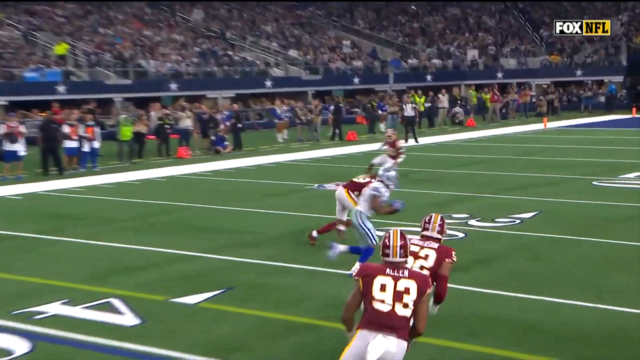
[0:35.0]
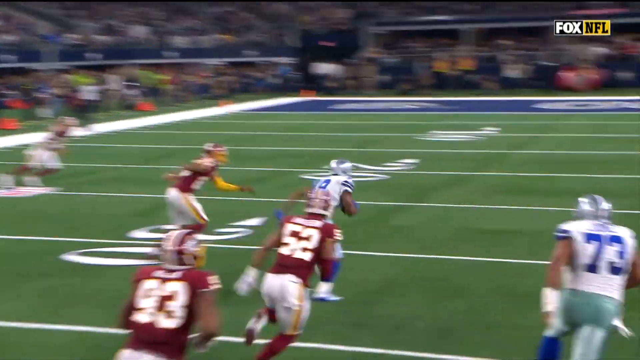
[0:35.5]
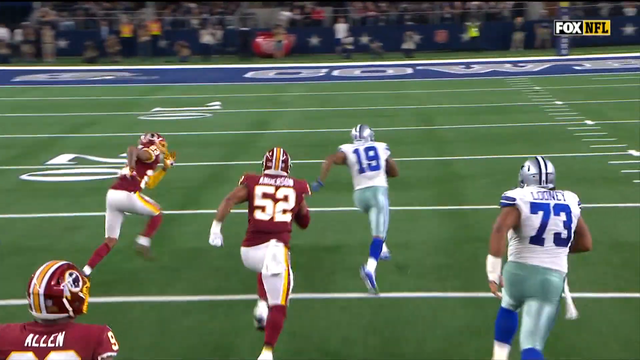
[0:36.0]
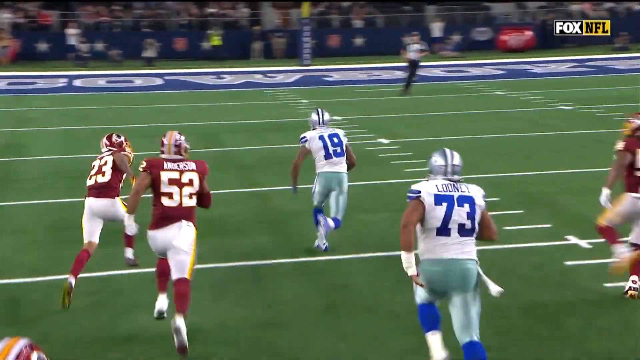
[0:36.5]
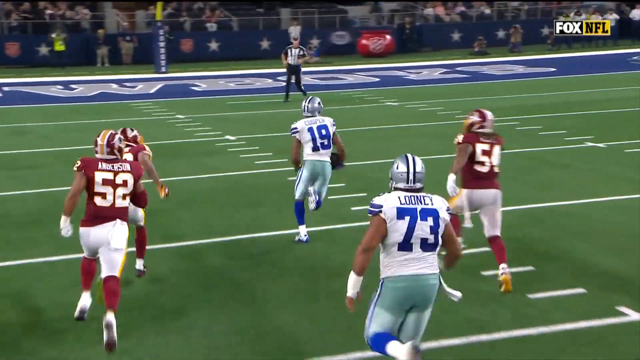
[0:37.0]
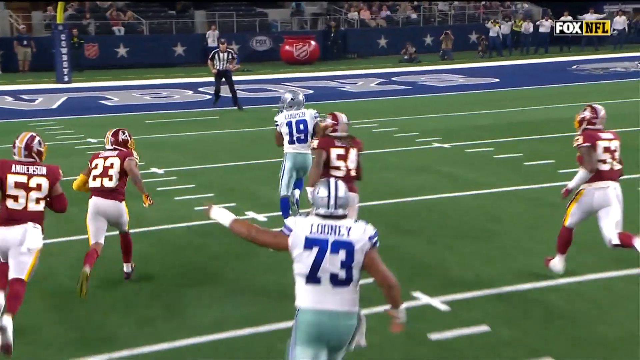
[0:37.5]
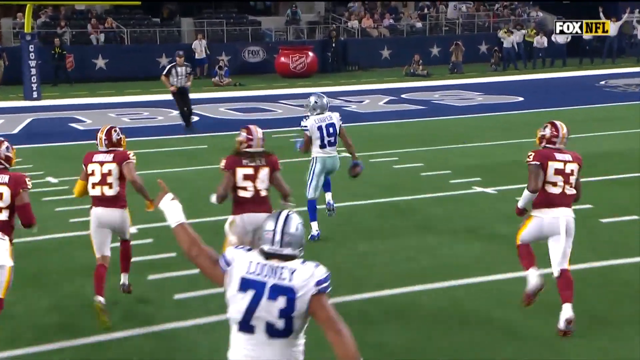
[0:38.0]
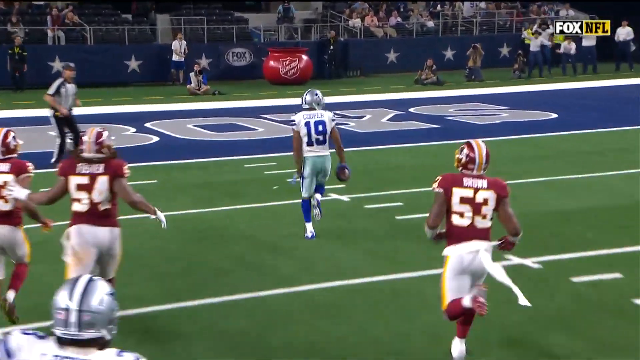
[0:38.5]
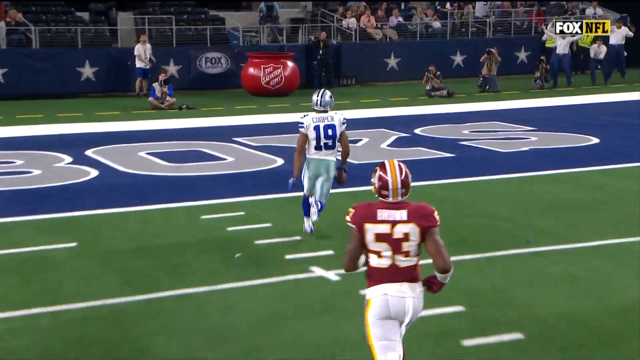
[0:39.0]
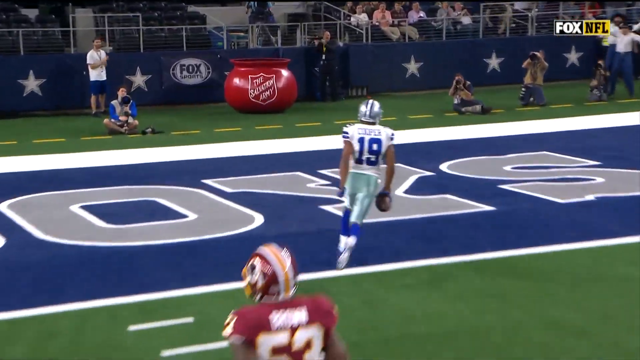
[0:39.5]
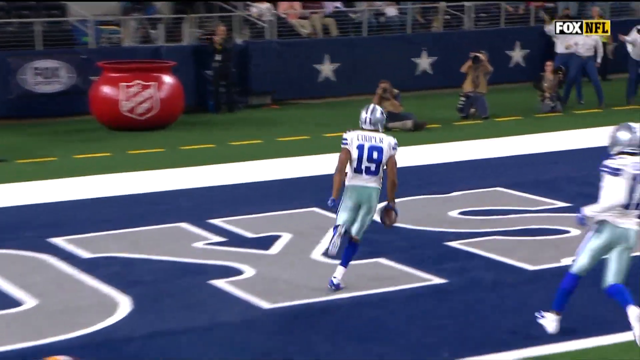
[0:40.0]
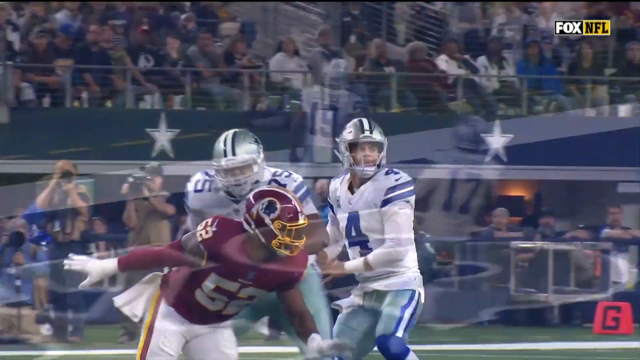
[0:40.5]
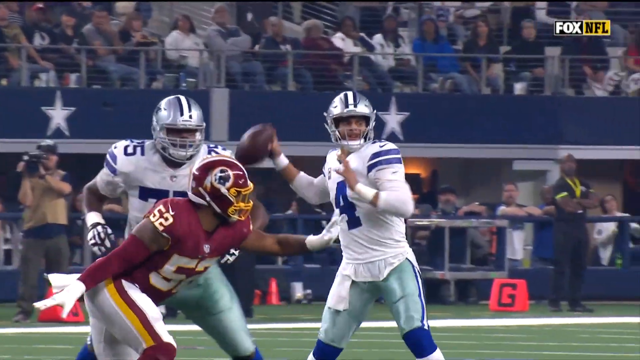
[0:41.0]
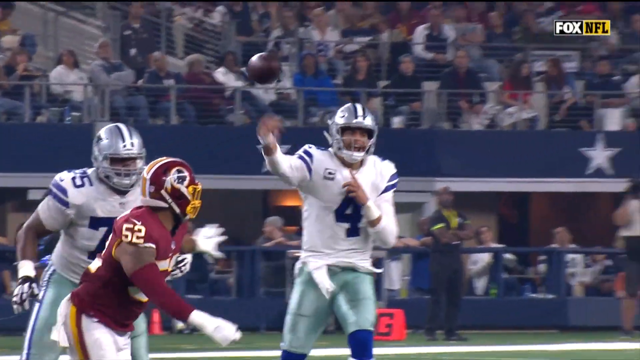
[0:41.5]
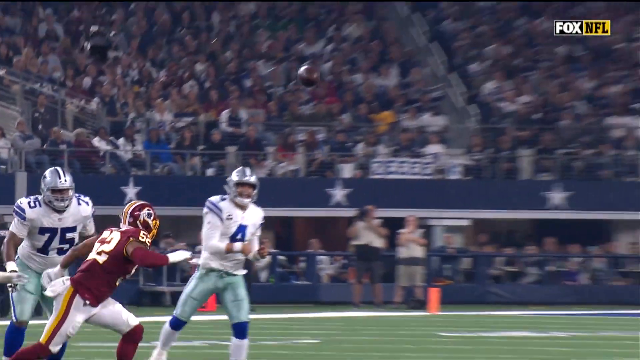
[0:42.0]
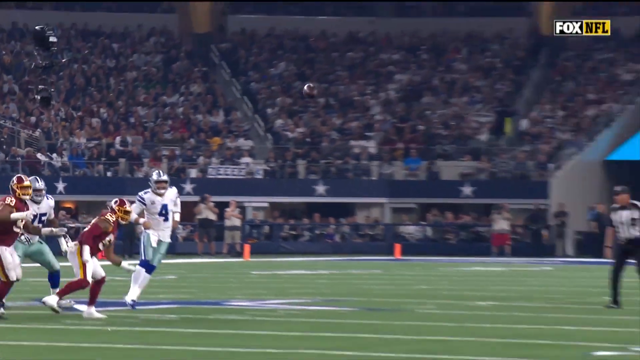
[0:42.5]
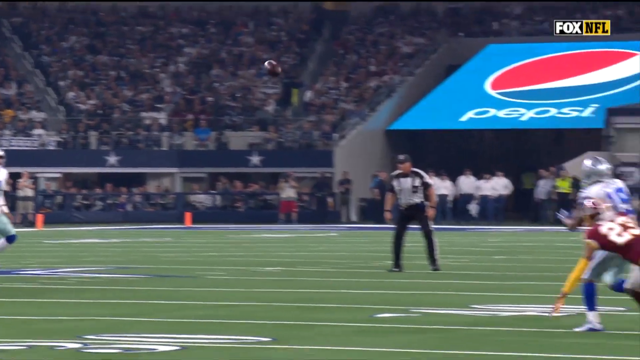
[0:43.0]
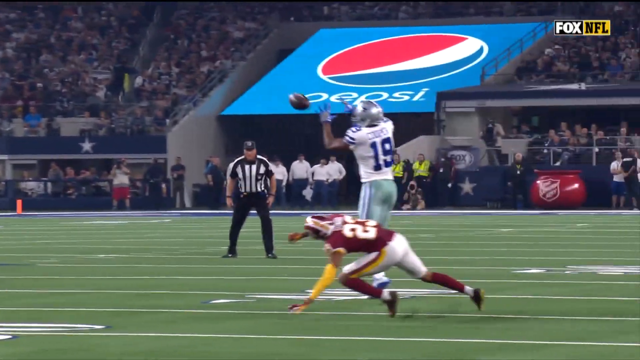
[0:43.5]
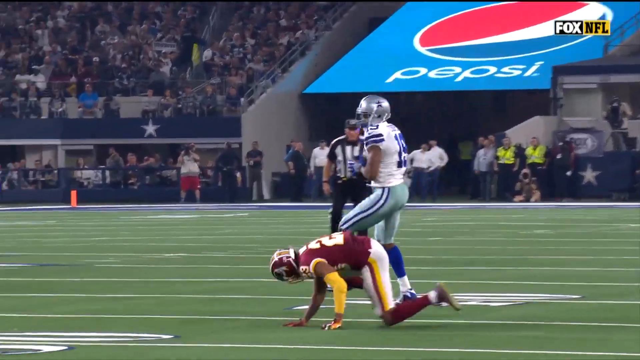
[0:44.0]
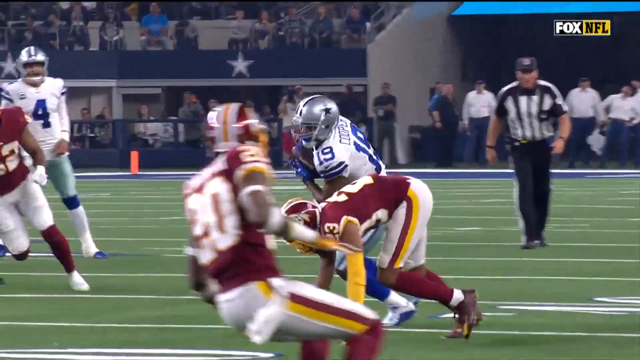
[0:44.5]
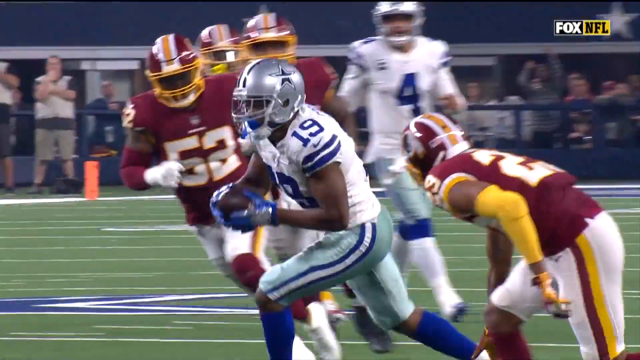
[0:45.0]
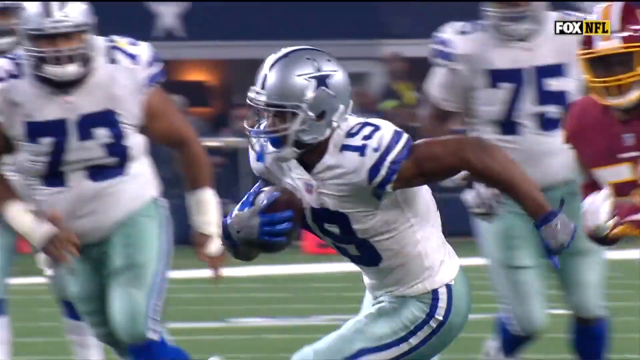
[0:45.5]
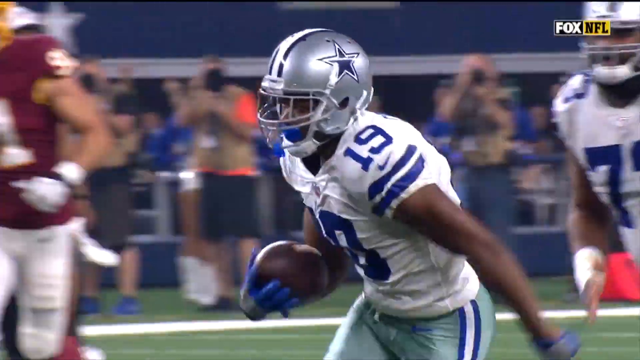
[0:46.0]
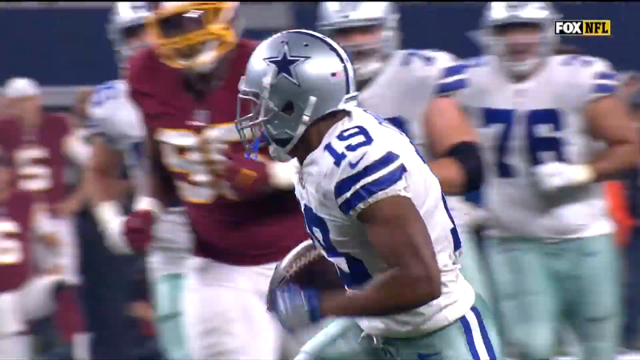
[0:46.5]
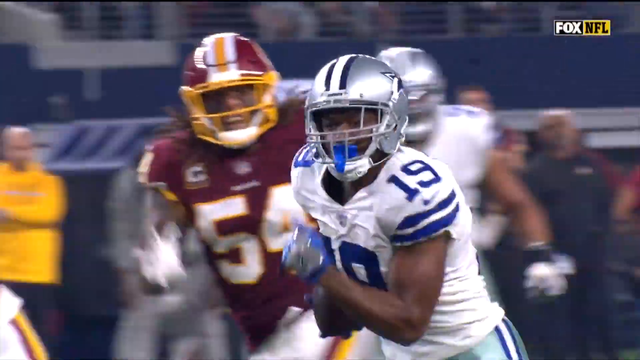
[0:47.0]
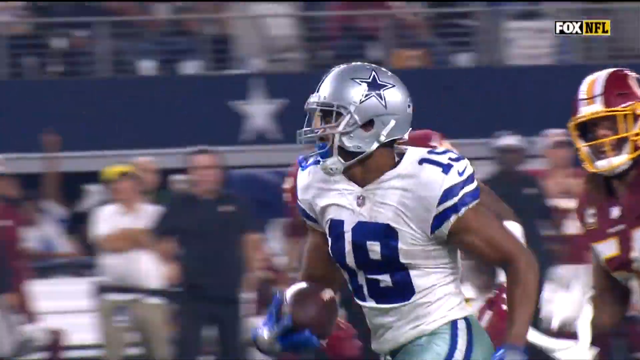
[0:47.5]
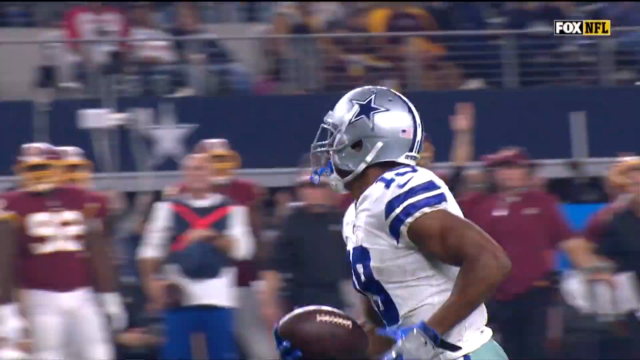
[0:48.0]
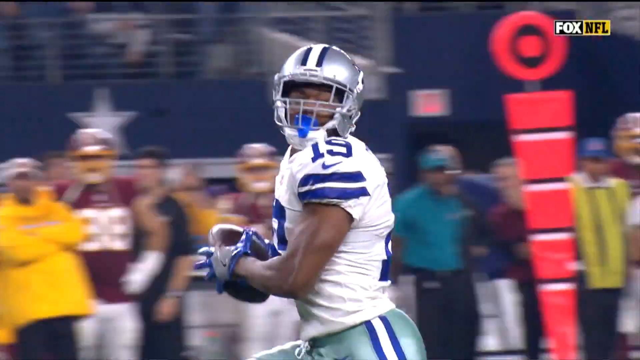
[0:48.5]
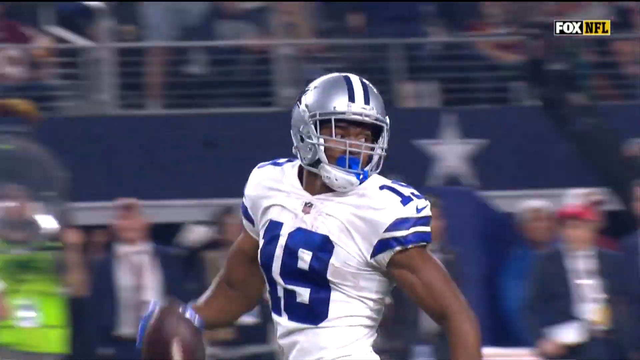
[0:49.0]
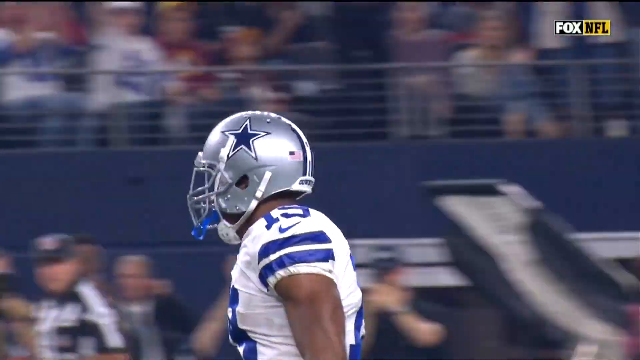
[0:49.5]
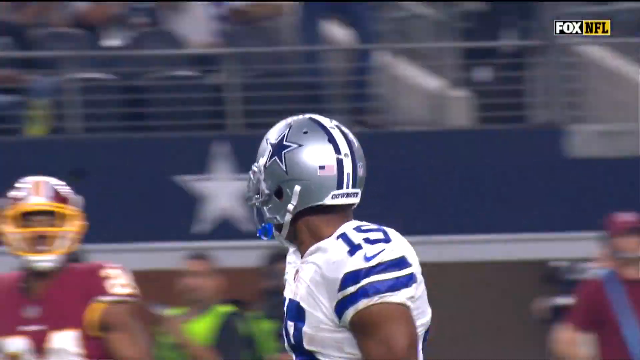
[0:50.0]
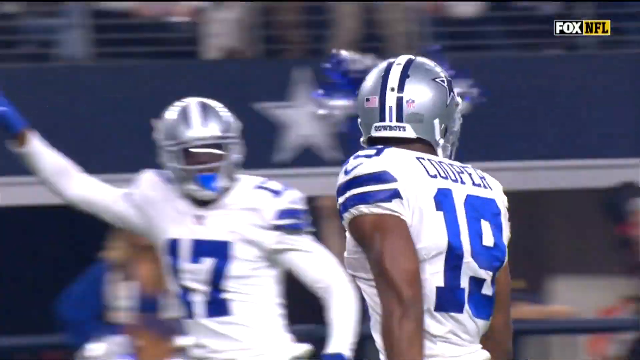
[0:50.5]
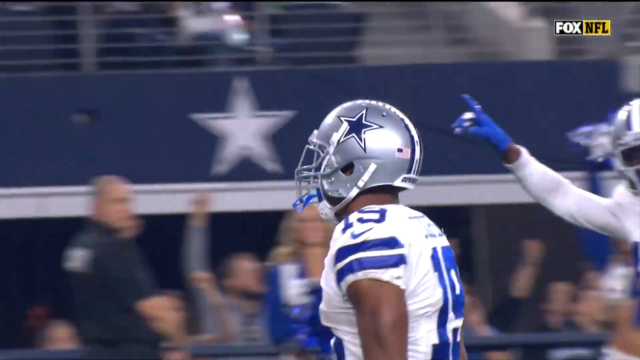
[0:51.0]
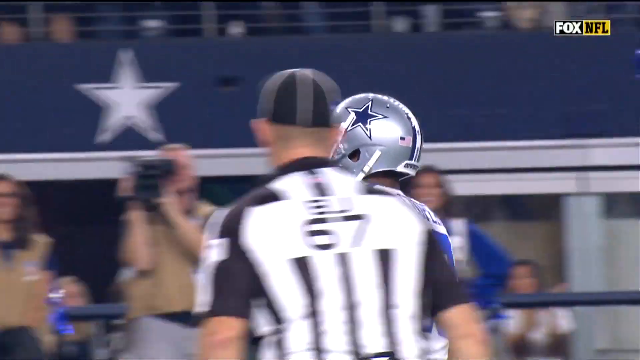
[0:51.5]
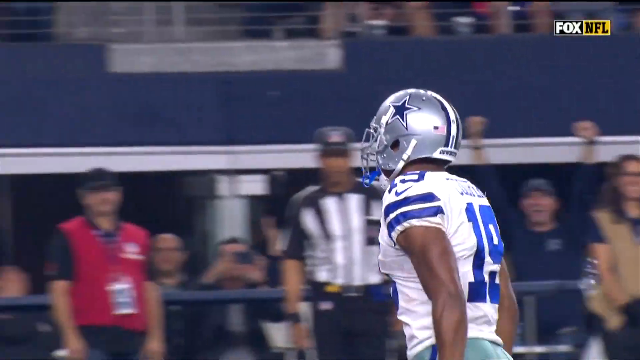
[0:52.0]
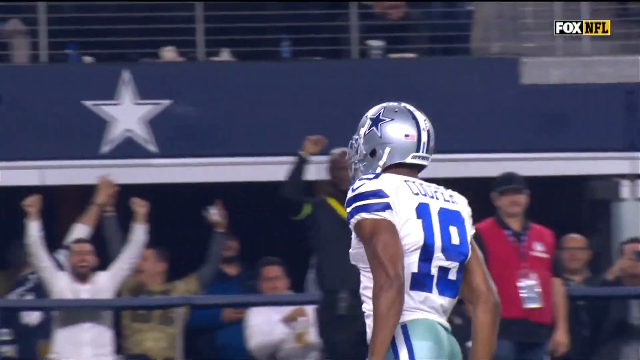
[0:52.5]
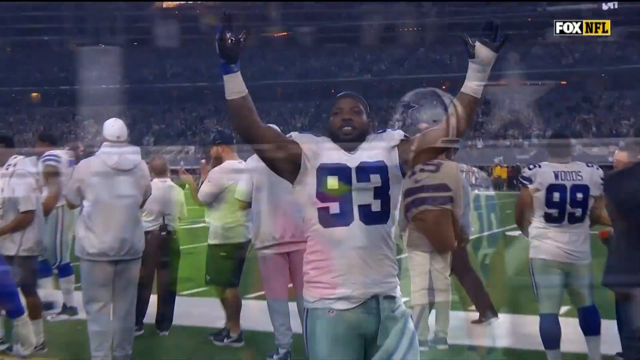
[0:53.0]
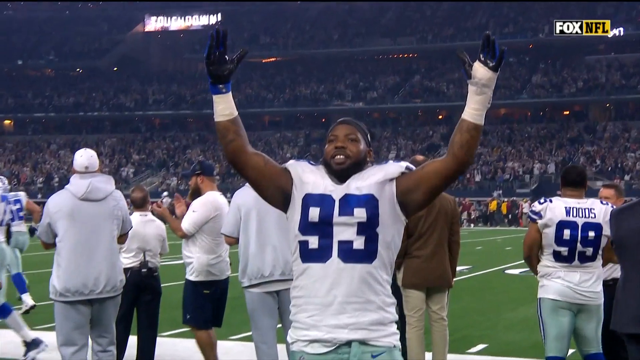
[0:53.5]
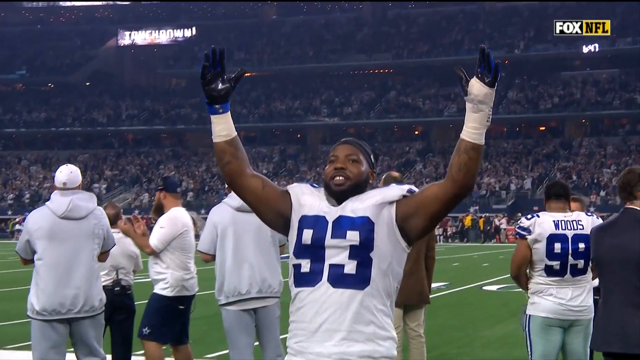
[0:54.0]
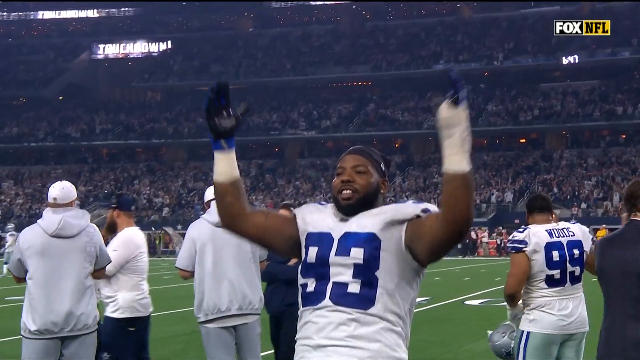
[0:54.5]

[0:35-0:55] Amari Cooper runs off with offensive lineman Looney, number 73, behind him. Number 54 seems to be telling the corner, number 23, Tucker, to stop; 23 was Cooper's initial defender. Cooper slows down as he gets closer to the end zone. Number 93, probably in the secondary on defense, has both hands up, wears big gloves and maybe has a cast on his left hand, then claps his hands together. Many fans and cheerleaders are in the background, along with another lineman, Woods, number 99.